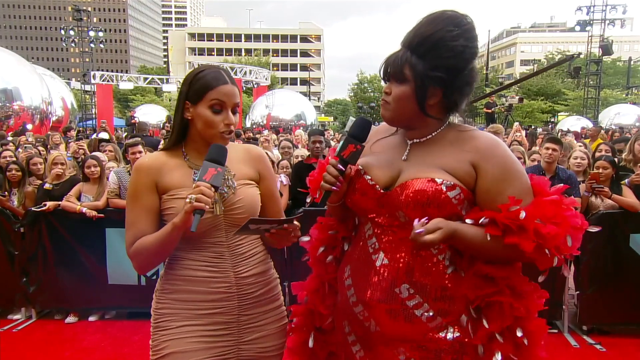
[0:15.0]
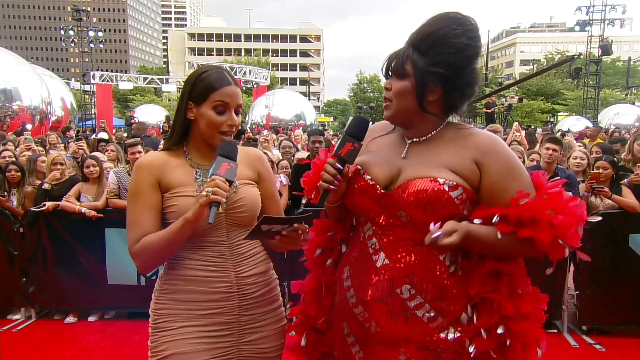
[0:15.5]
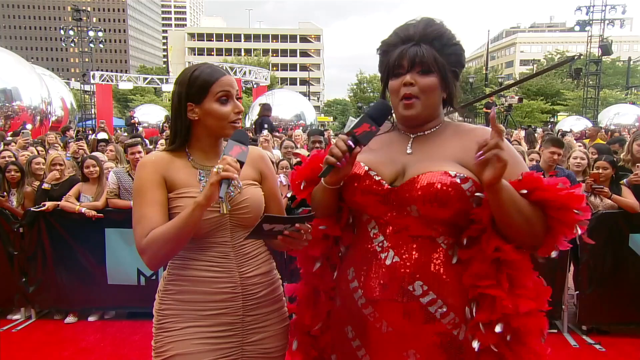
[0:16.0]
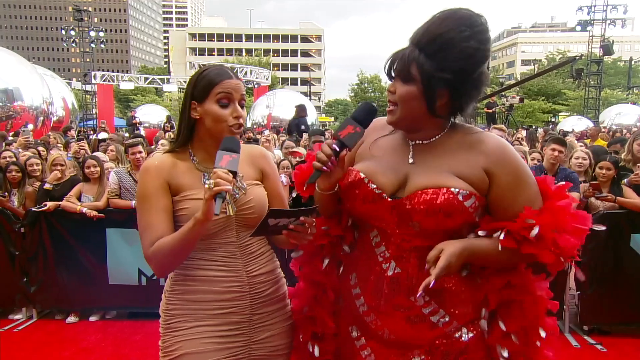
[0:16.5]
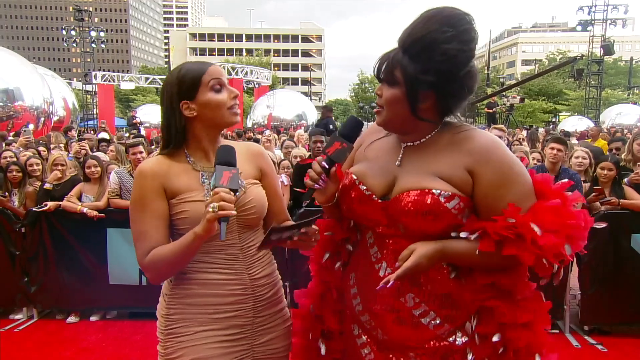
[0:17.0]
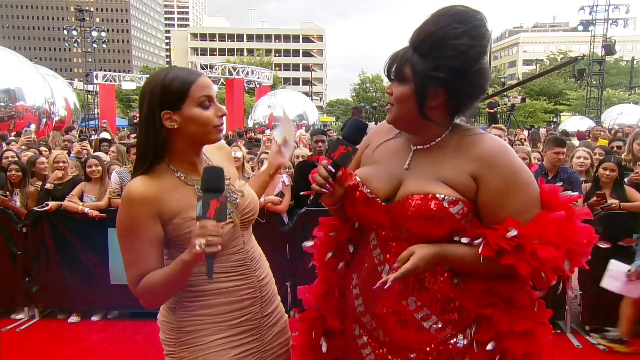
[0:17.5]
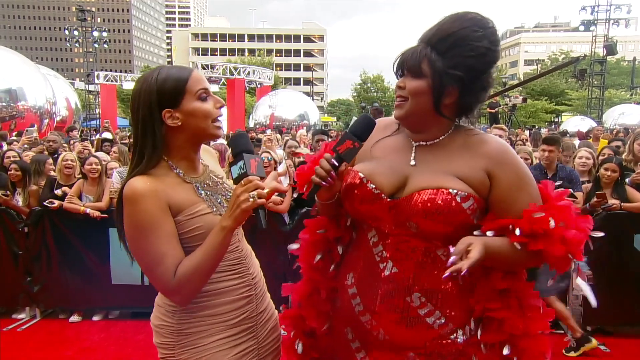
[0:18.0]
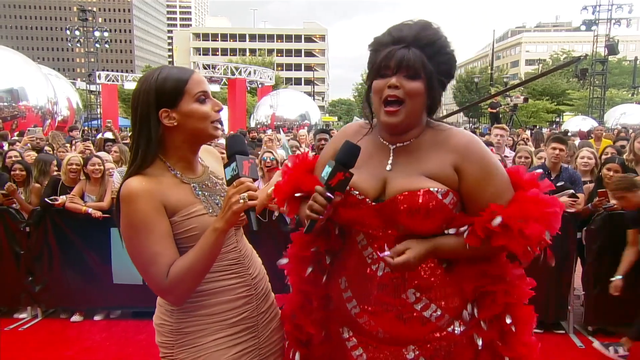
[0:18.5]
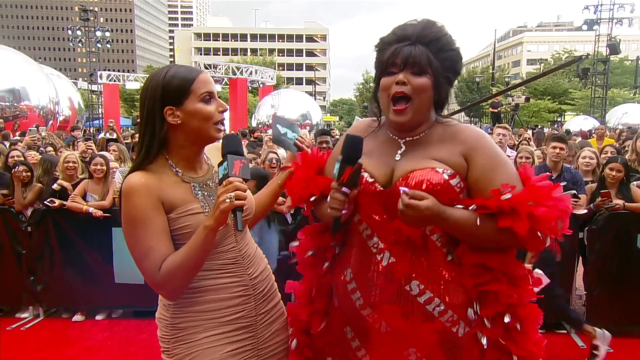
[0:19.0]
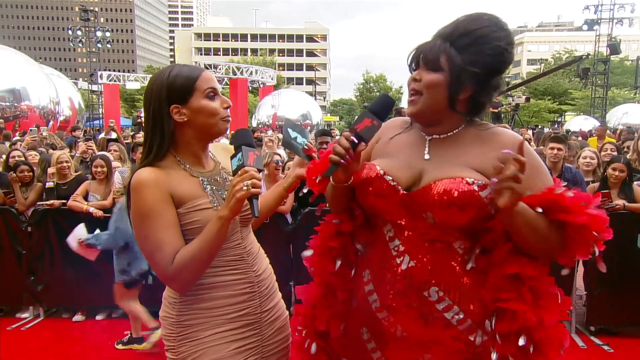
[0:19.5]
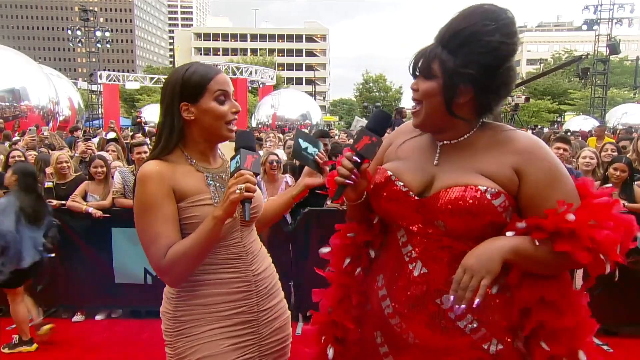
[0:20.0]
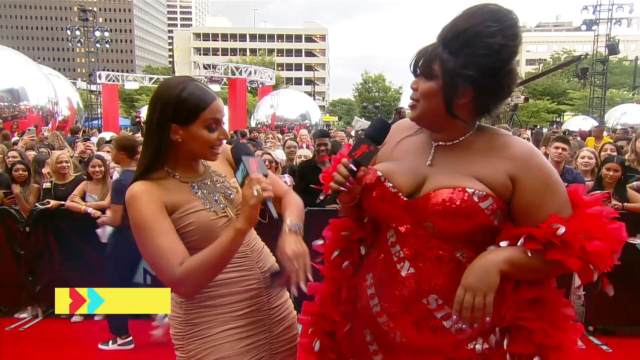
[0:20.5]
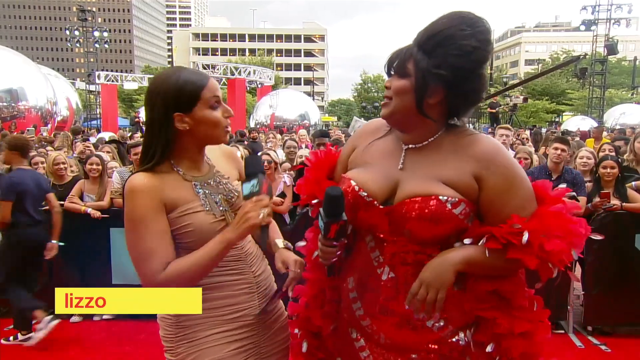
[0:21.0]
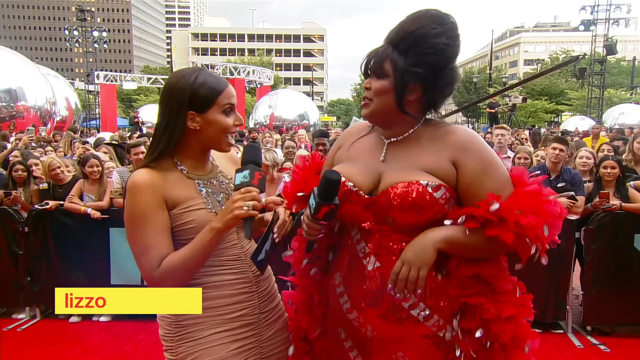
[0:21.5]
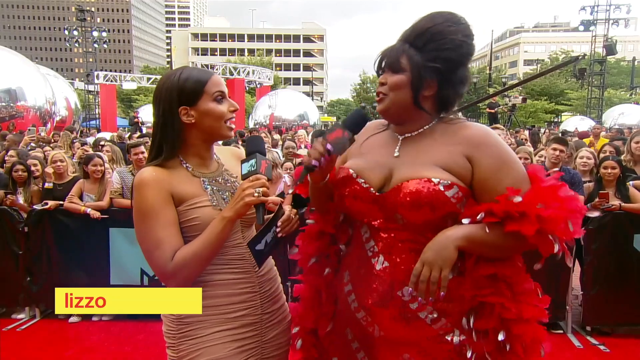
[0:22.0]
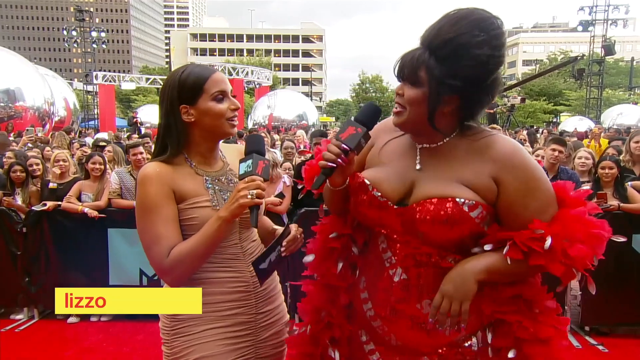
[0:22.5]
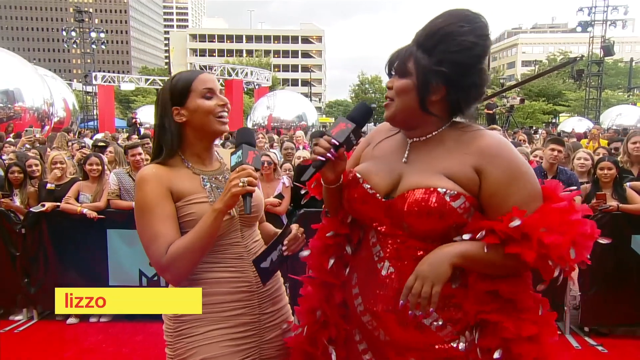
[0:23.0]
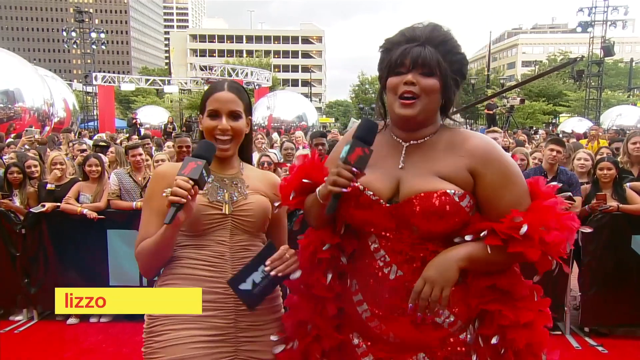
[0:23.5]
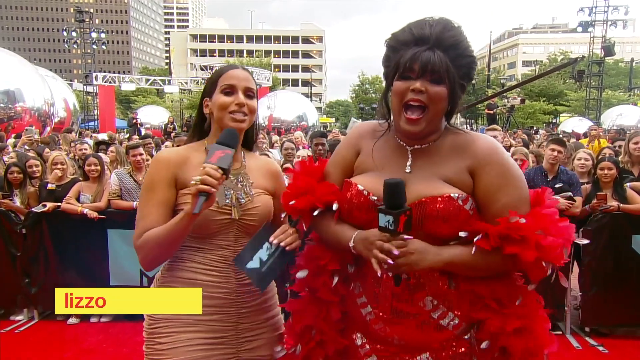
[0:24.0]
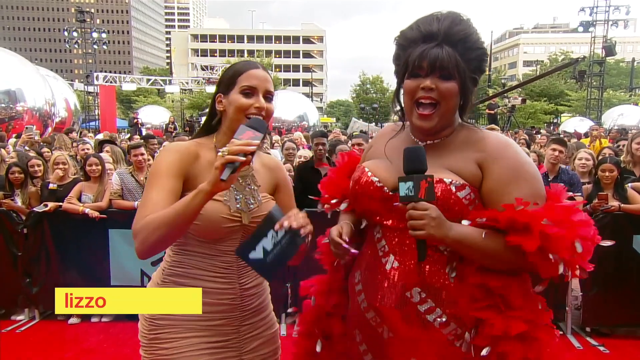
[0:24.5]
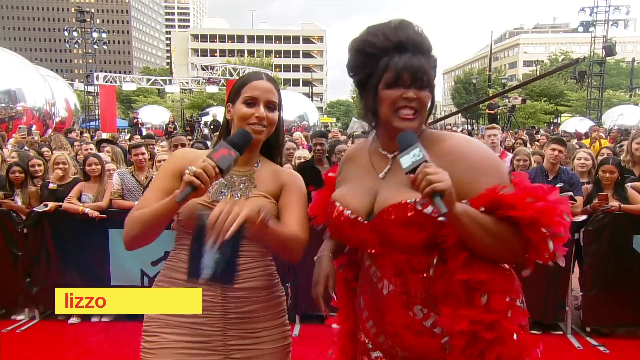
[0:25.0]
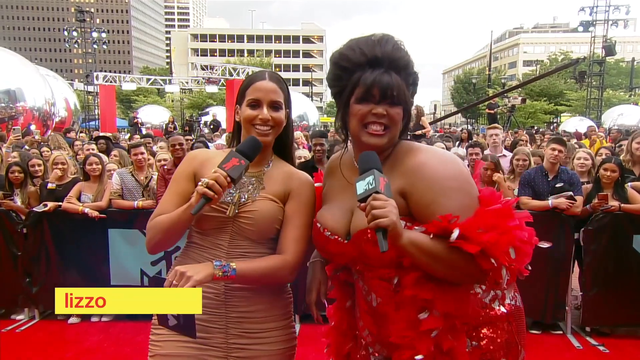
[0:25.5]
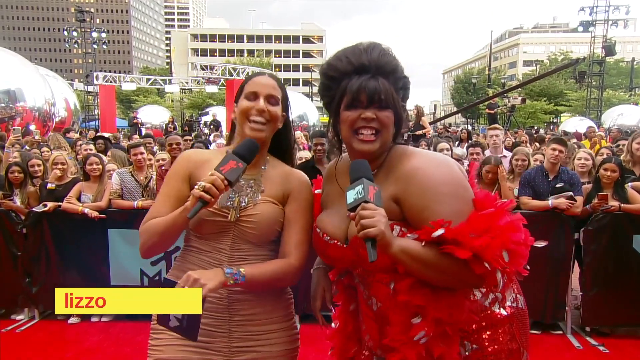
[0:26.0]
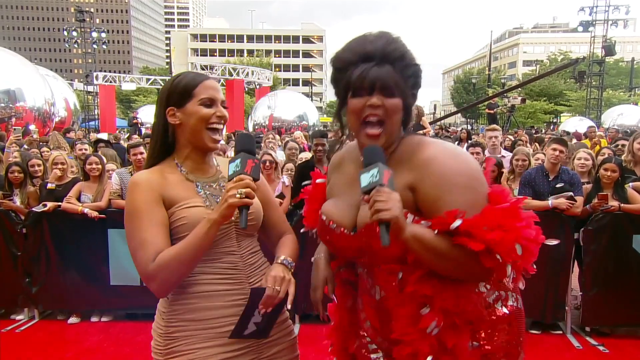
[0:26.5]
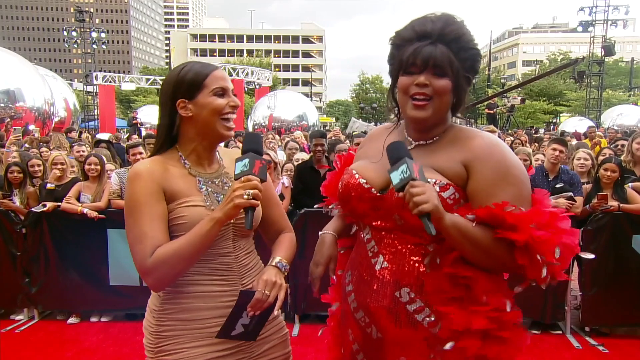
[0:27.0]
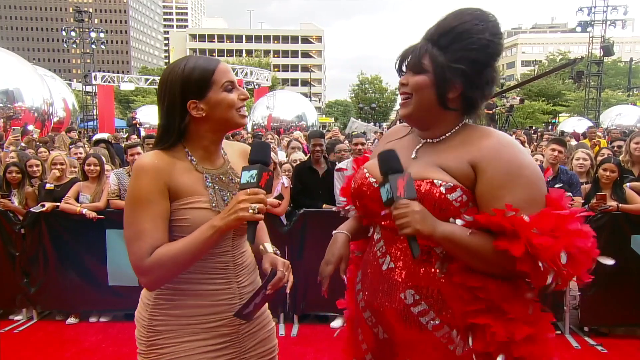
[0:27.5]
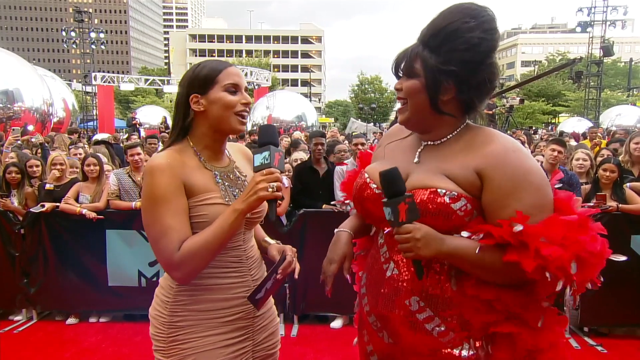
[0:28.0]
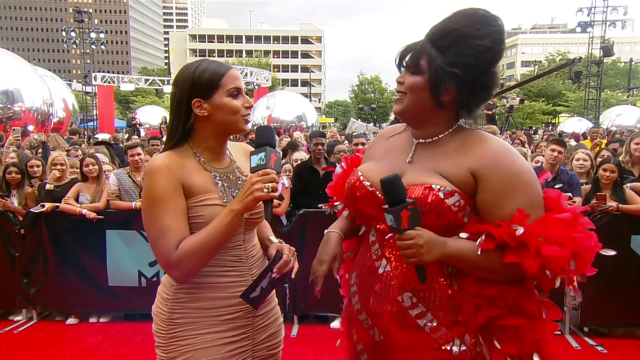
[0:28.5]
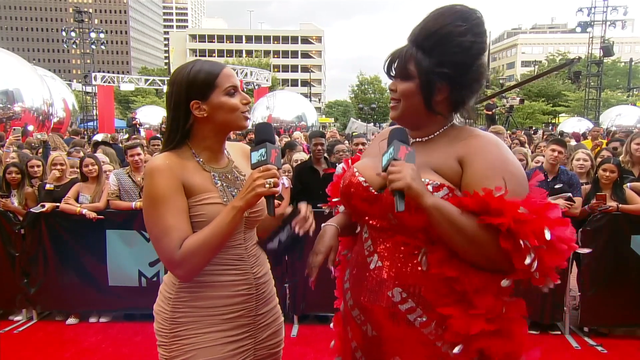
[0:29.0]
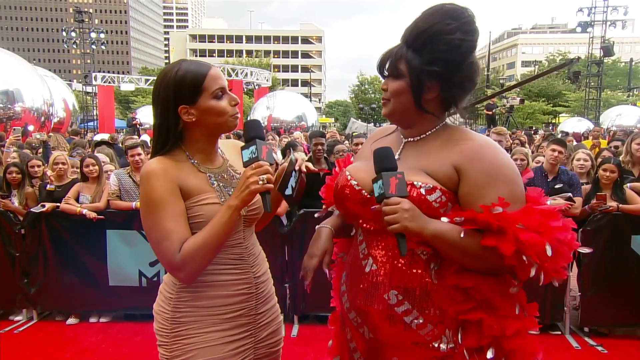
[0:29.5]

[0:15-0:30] The interviewer reads from a black card of questions that she holds in her left hand. She and Lizzo each have a black microphone that they talk into. The interviewer stands on the left; she wears a very large silver necklace, and her hair is straightened and parted in the middle. She appears to be of mixed race, though her ethnicity is unclear, and she is shorter than Lizzo. She asks her questions while gesturing very animatedly, and Lizzo laughs as they speak back and forth. They then lean in together, smiling and grinning at the camera taping them as if for a picture, and continue to talk and laugh. The interview looks very friendly and perhaps funny.